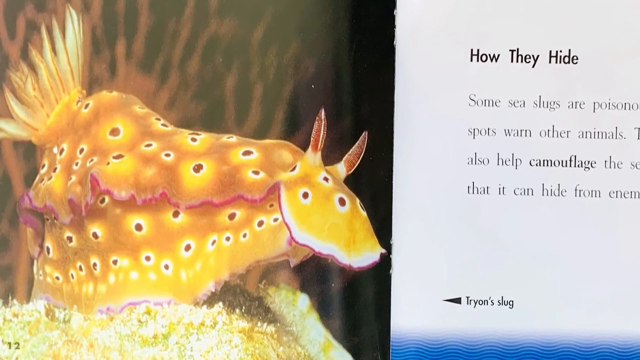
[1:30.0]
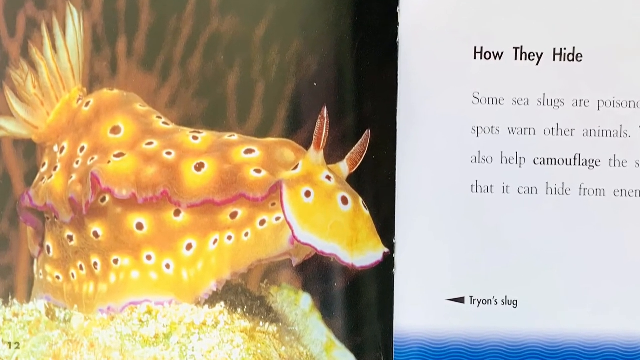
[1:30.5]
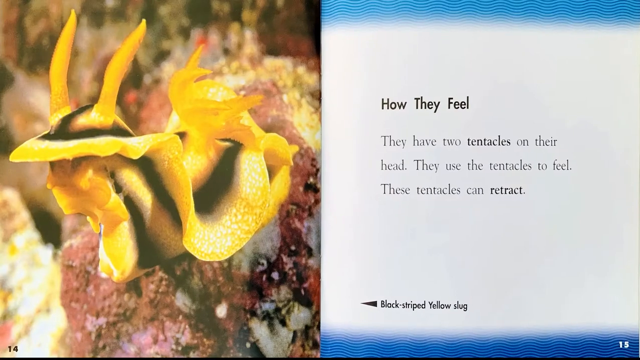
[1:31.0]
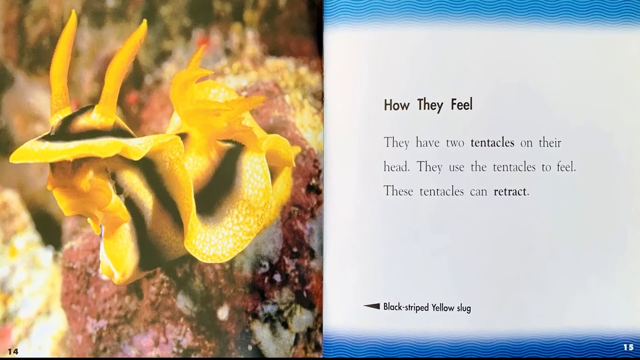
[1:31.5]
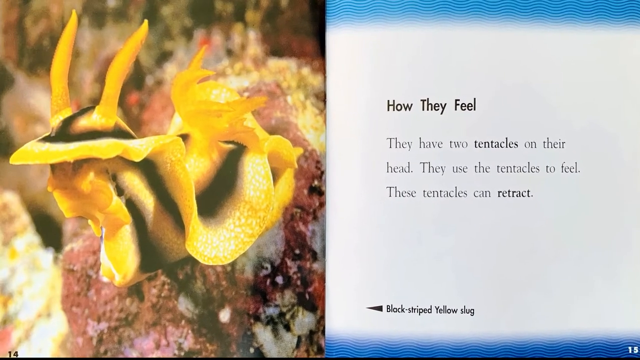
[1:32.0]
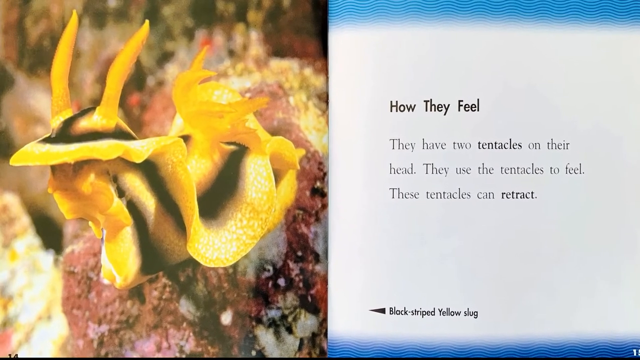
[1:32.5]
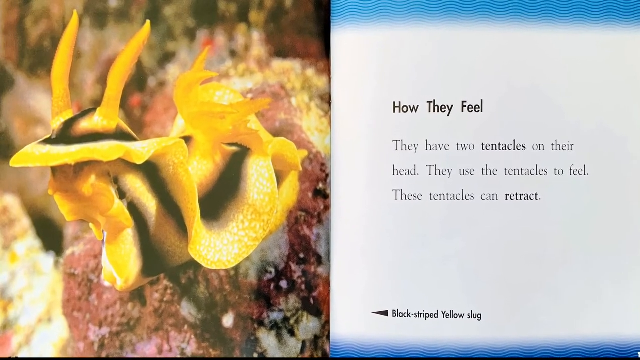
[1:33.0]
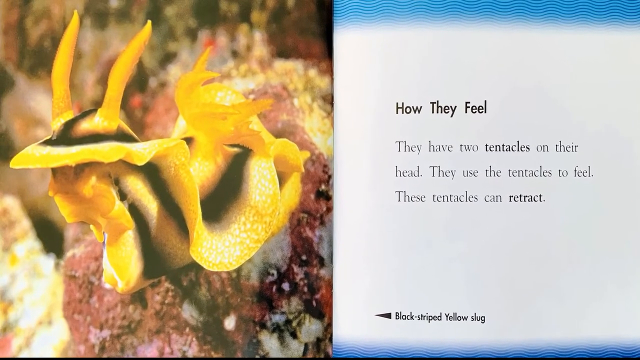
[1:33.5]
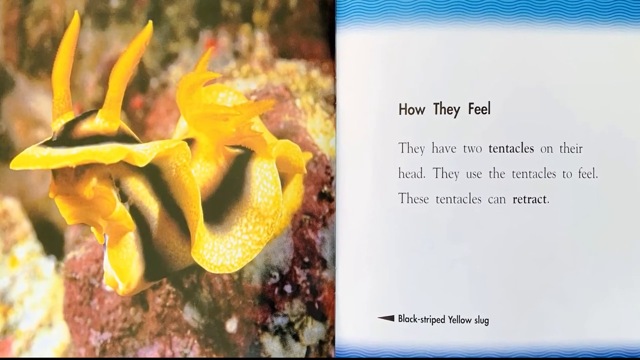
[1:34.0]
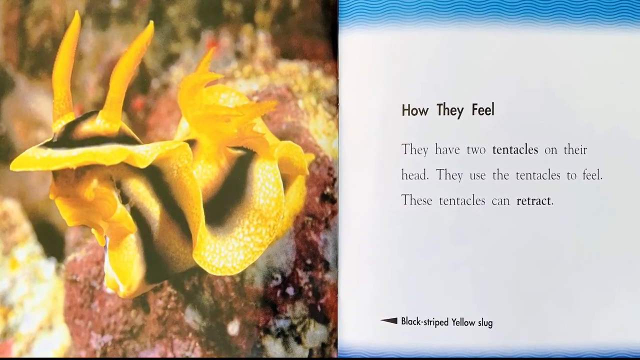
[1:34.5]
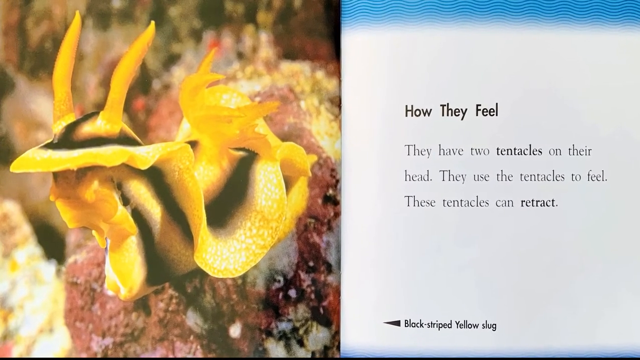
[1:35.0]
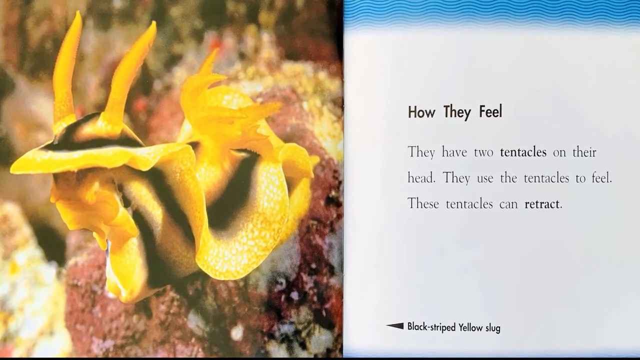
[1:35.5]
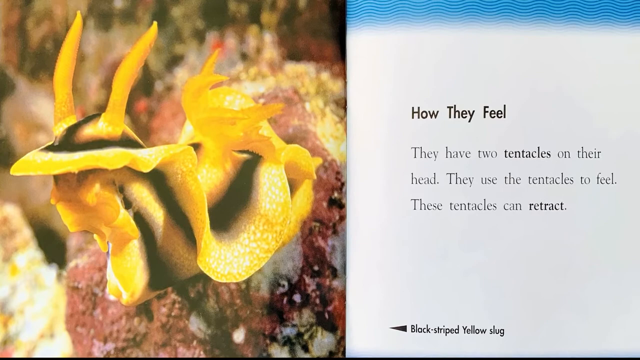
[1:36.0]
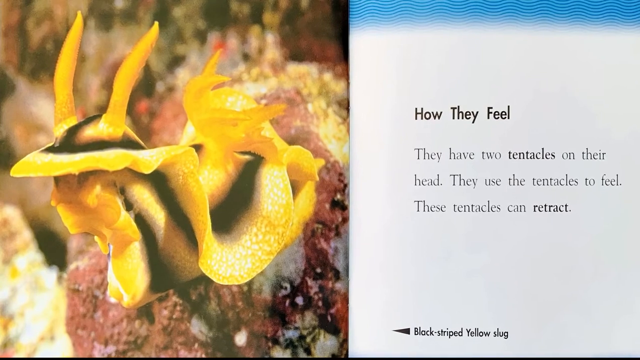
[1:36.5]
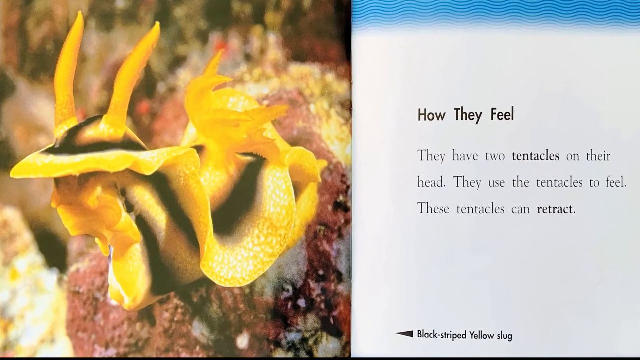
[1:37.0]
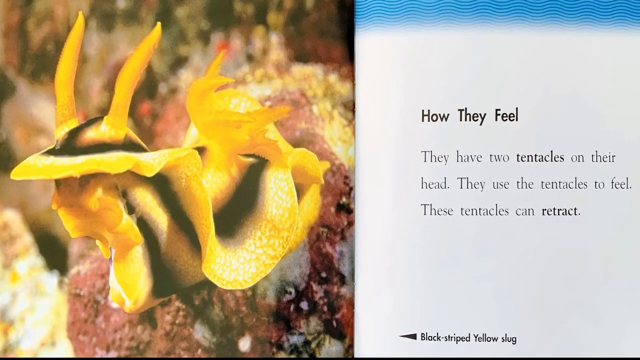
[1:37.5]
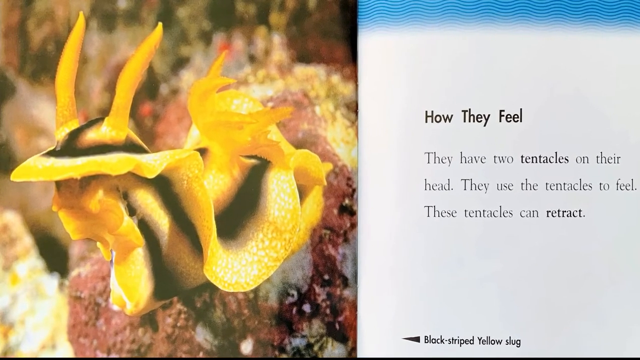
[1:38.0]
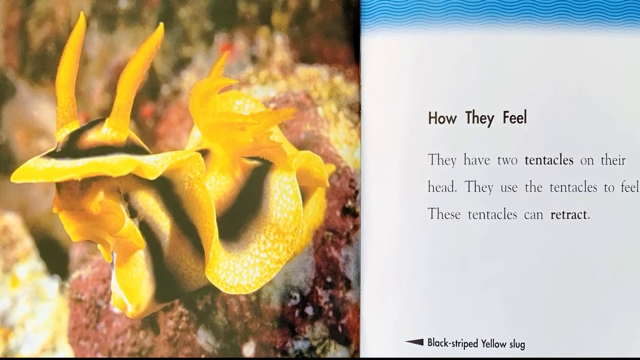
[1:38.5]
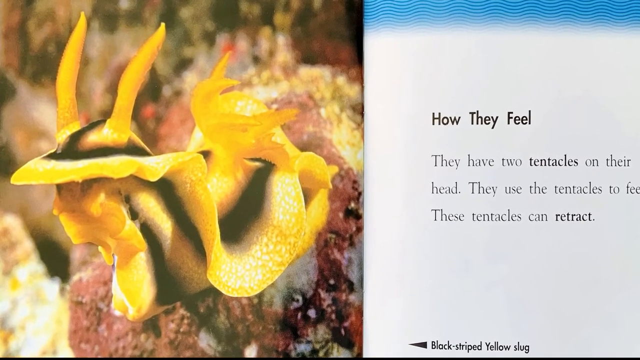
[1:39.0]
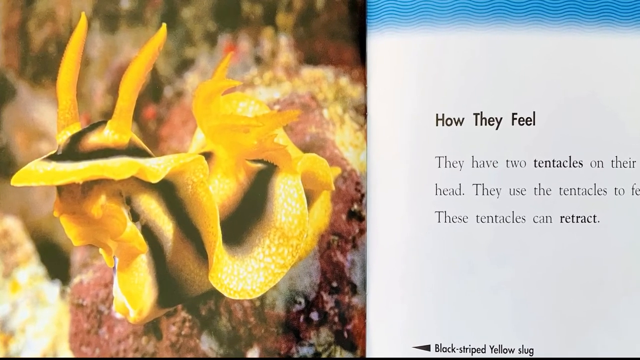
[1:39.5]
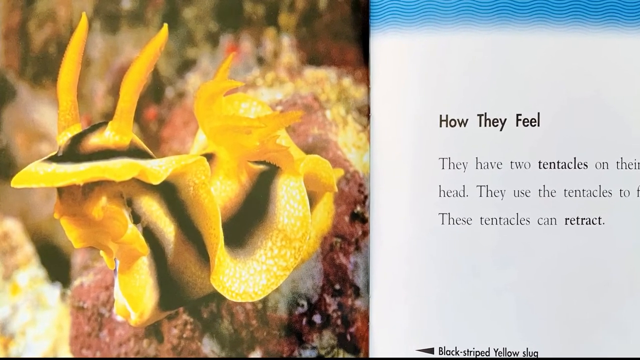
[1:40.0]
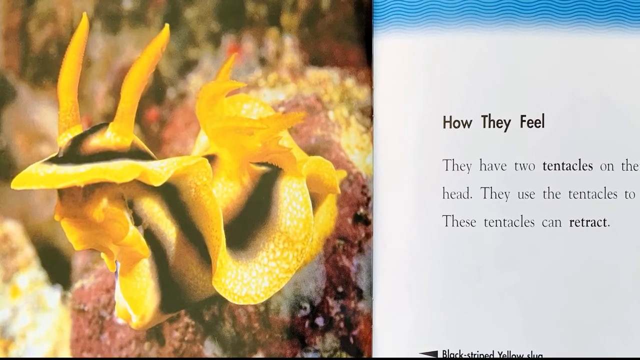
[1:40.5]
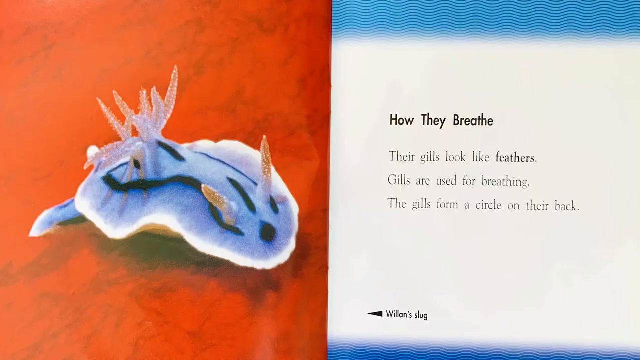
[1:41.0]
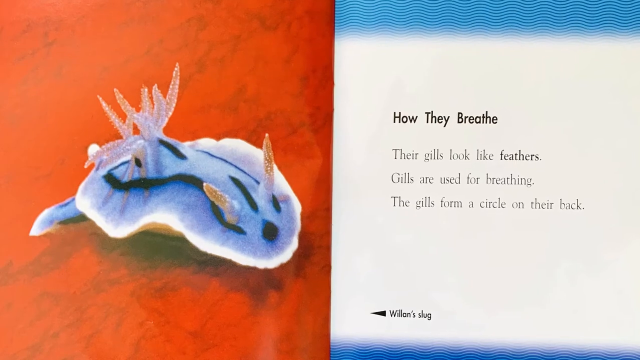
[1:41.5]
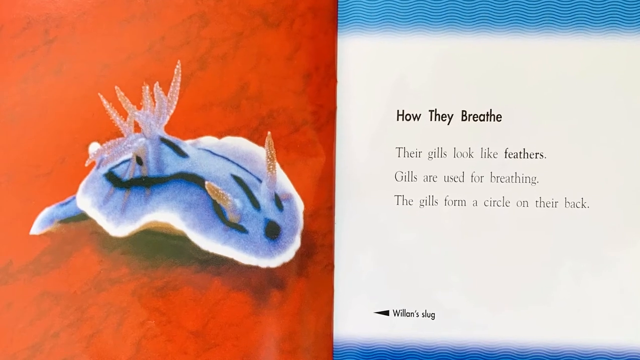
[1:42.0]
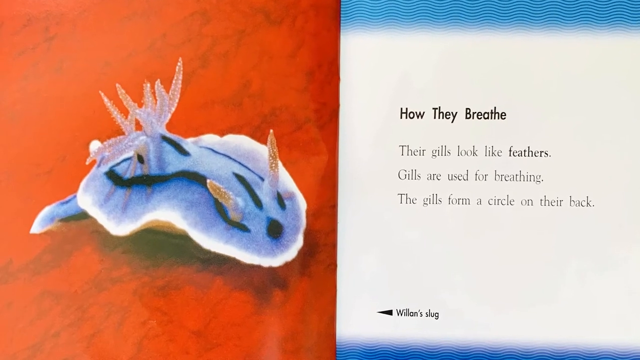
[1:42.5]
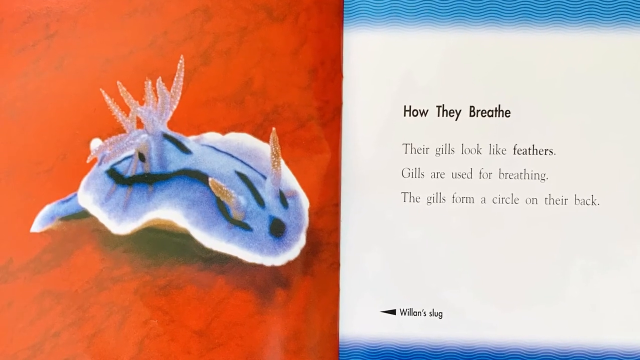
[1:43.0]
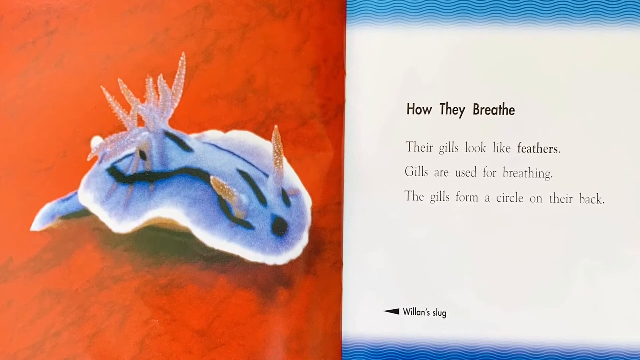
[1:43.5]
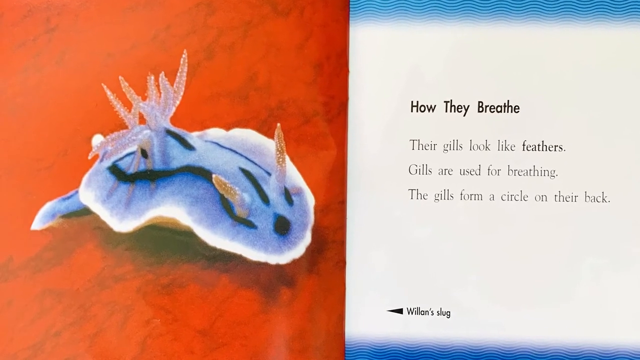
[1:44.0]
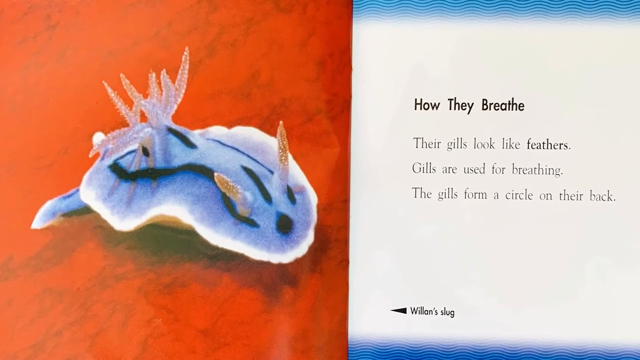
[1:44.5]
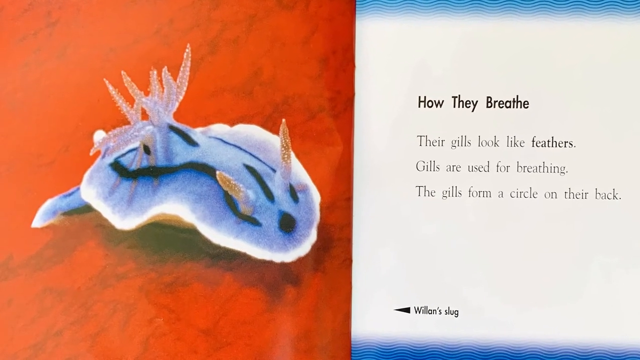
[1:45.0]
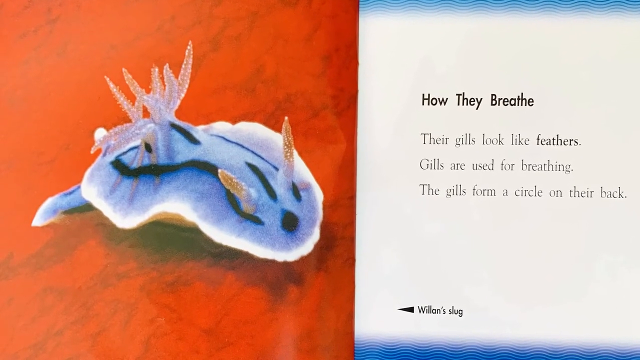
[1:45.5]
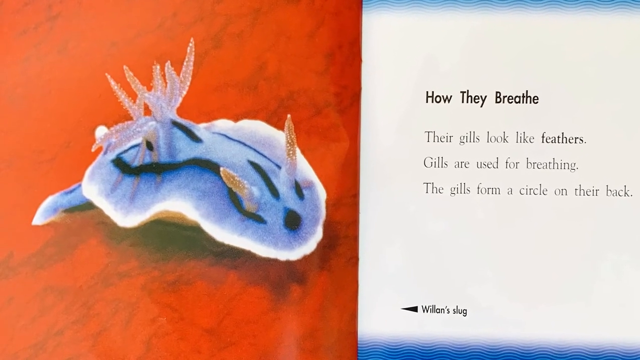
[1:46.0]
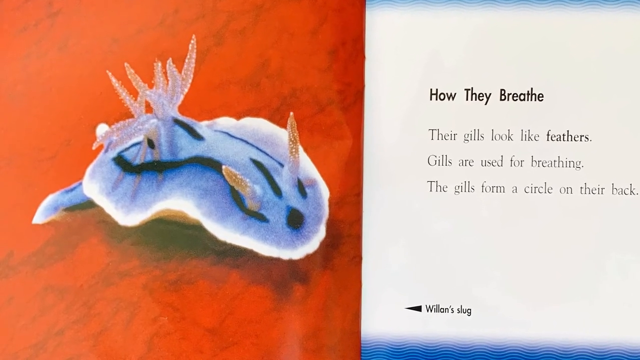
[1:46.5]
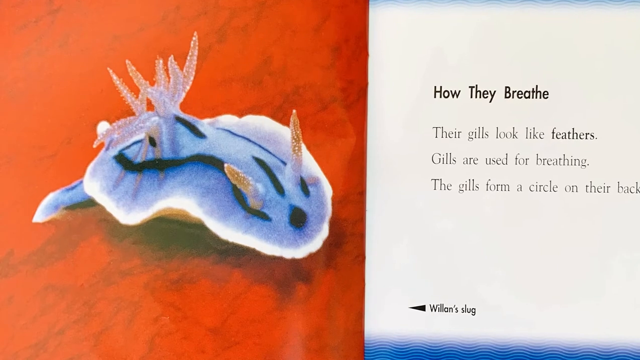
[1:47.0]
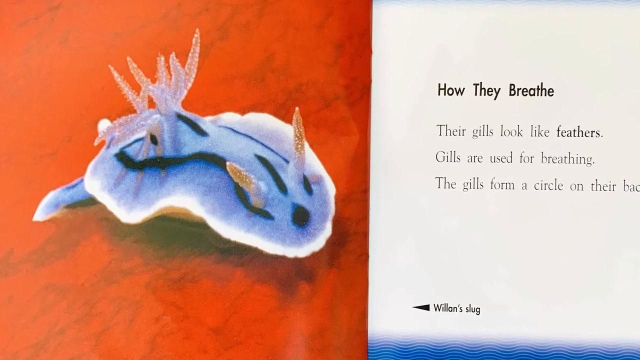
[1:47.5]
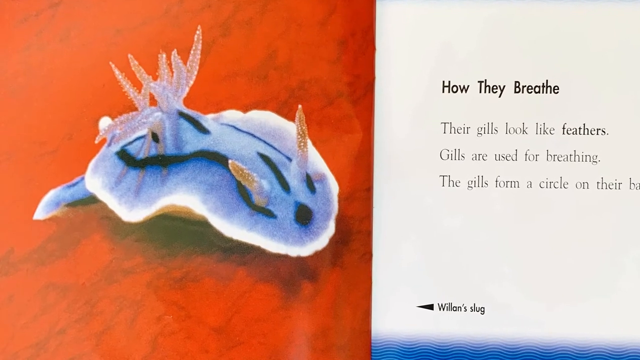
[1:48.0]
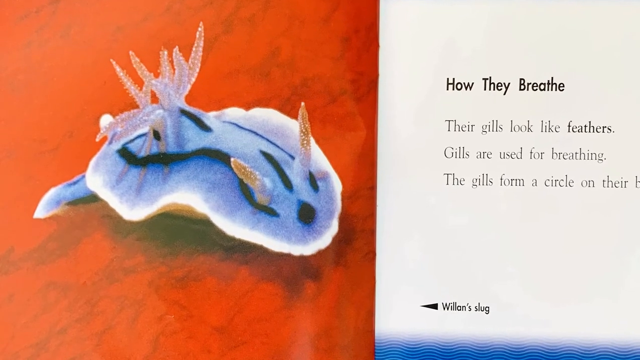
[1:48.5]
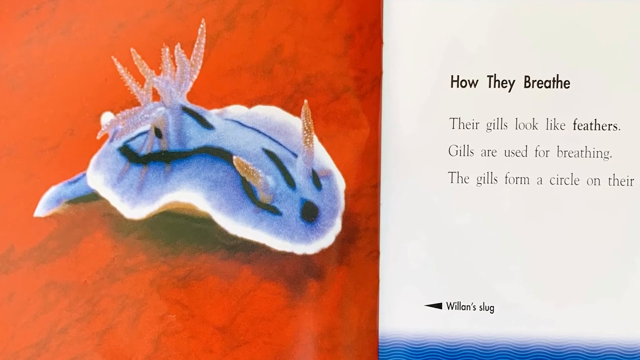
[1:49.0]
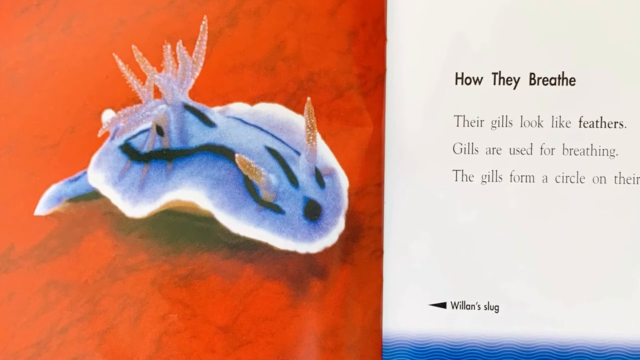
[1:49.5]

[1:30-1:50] A side-by-side spread shows an image and a white page of text. The white page on the right has the bold black heading "how they hide" near the top, with a paragraph beneath it, and at the bottom left a black arrowhead points to the left, next to the label "Tryon's Slug." The left page has an image of a large yellow sea slug with dark red spots all over it, red antennae, and a long, stringy yellow tail, sitting on yellow coral with other light brown ocean plants behind it. The screen changes to another spread. The white page on the right has the bold black heading "how they feel" at the top and, in less bold black font, "they have two tentacles on their head. They use the tentacles to feel. These tentacles can retract." At the bottom left, a black arrowhead points to the left, next to the label "black striped yellow slug." The left page shows a yellow slug with black streaks down its back and underbody, two long, thick yellow antennae, and a short, somewhat thick, yellow stringy tail. It is on brown coral and appears to be on its stomach, with its head and upper body somewhat perked up. Another spread follows. The white page on the right has a black heading at the top reading "how they breathe" and beneath it "their gills look like feathers. Gills are used for breathing. The gills form a circle on their back." At the bottom left, a black arrowhead points to the left, next to the label "Willan's slug." On the left is an image of a round, light blue slug with white coloring around its edges, somewhat wavy black strips down its back, gold-colored antennae sticking out of its head, and a light blue, transparent, long tentacle-like tail coming out of its lower back. It is on some kind of red ground.